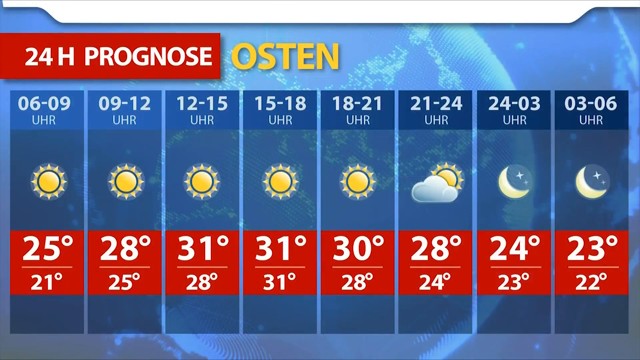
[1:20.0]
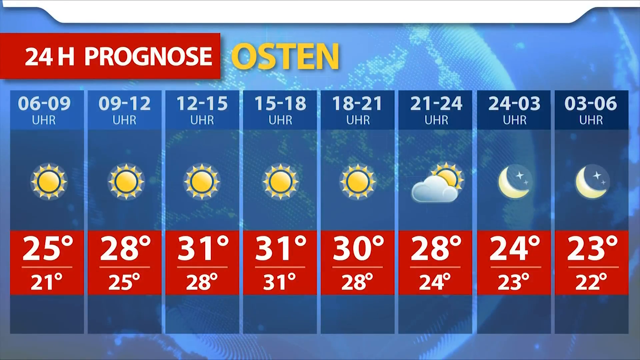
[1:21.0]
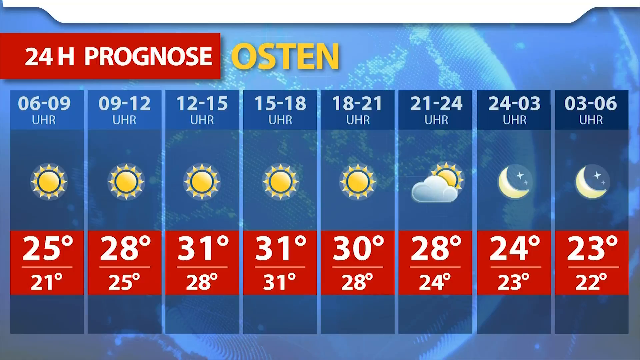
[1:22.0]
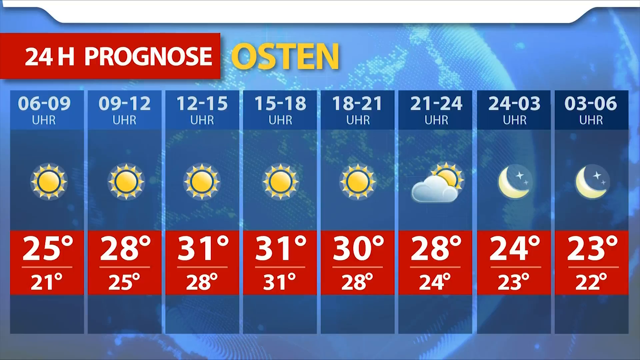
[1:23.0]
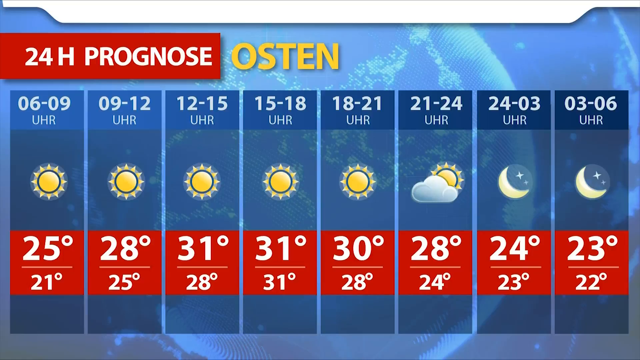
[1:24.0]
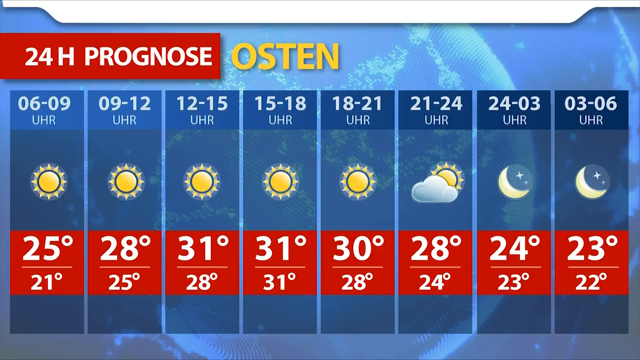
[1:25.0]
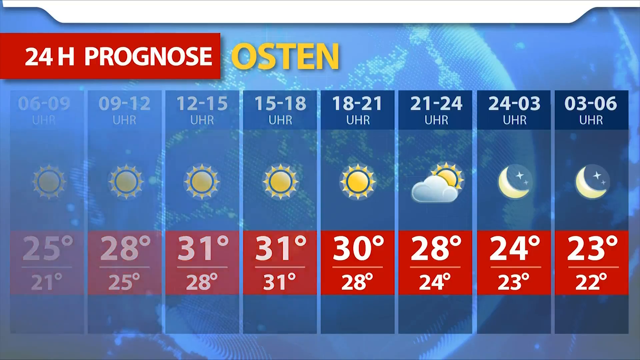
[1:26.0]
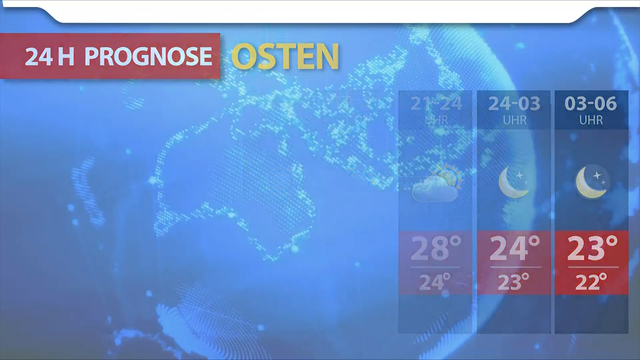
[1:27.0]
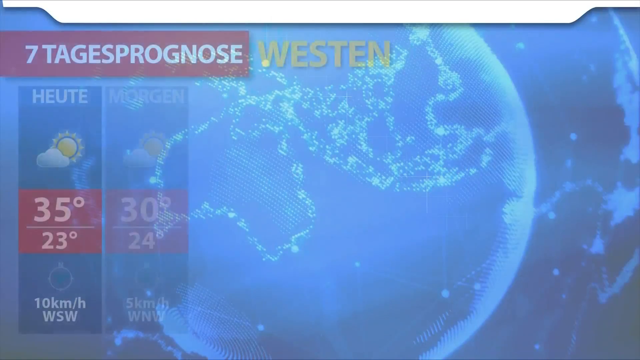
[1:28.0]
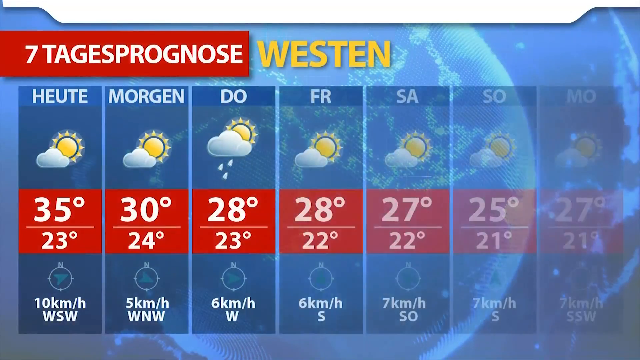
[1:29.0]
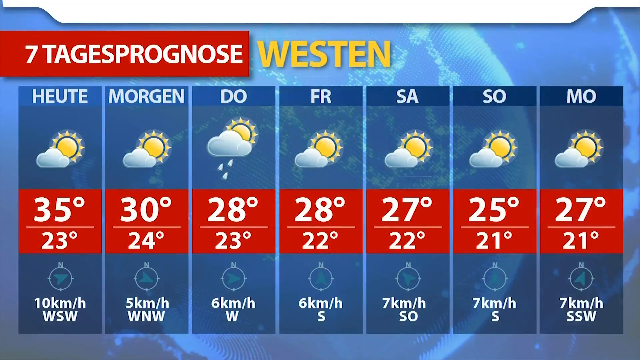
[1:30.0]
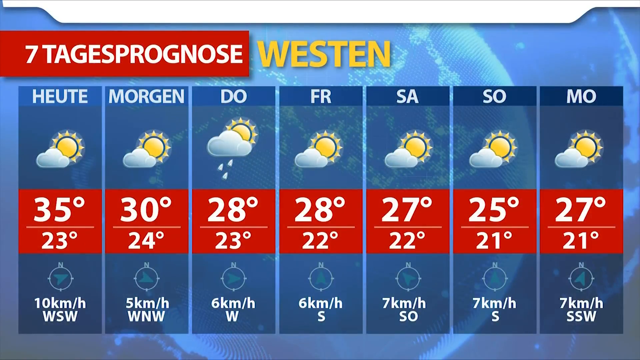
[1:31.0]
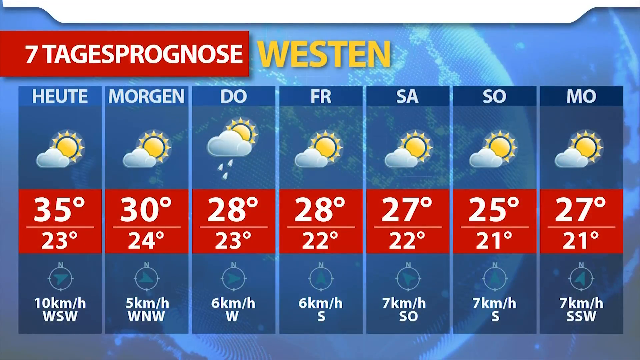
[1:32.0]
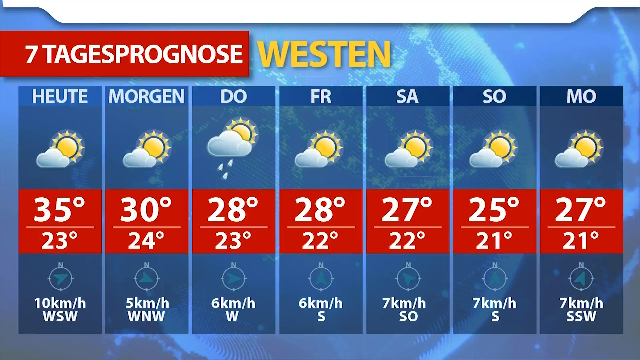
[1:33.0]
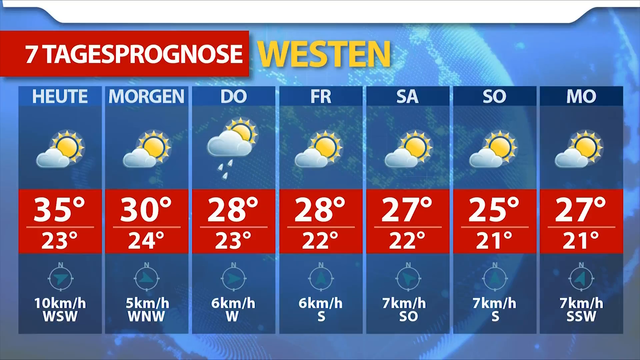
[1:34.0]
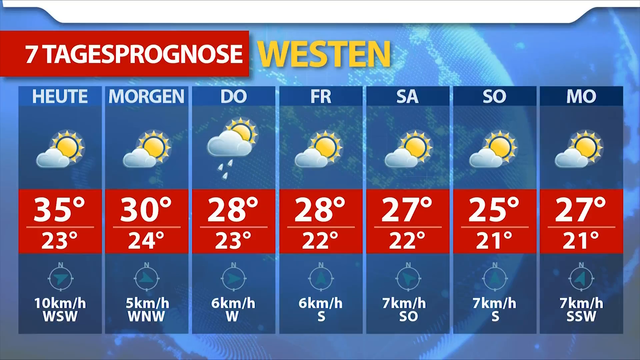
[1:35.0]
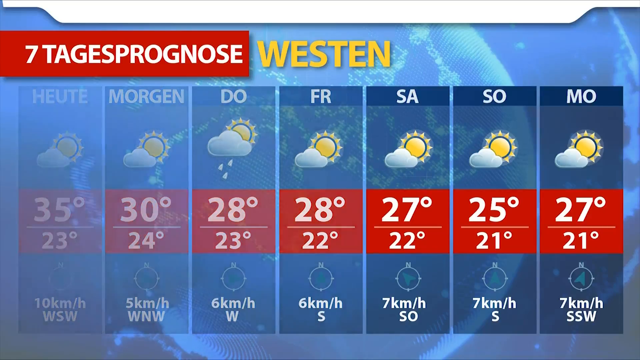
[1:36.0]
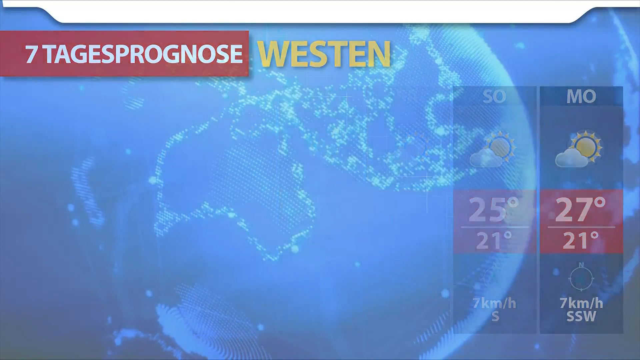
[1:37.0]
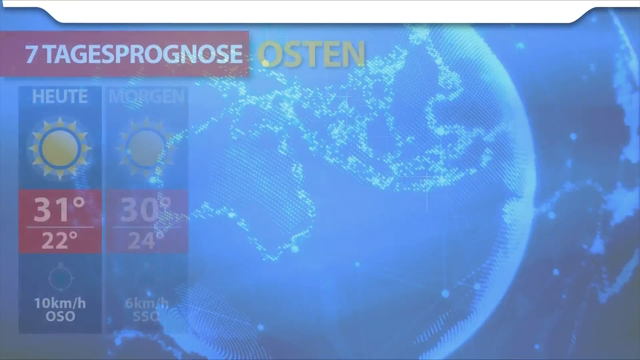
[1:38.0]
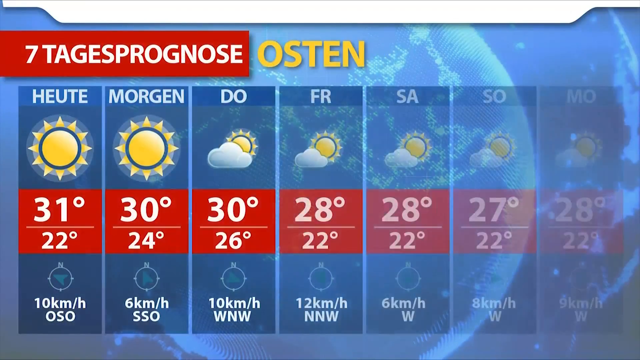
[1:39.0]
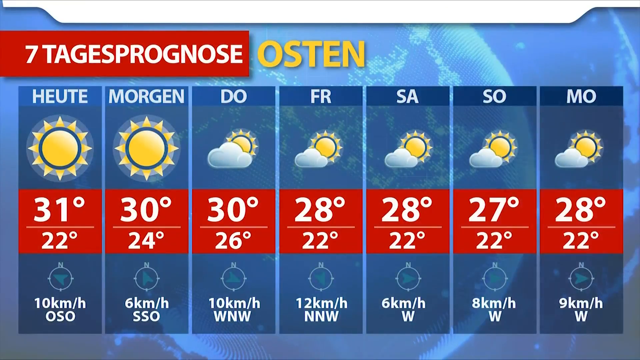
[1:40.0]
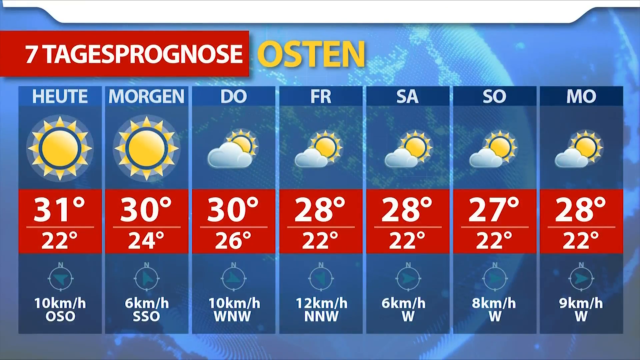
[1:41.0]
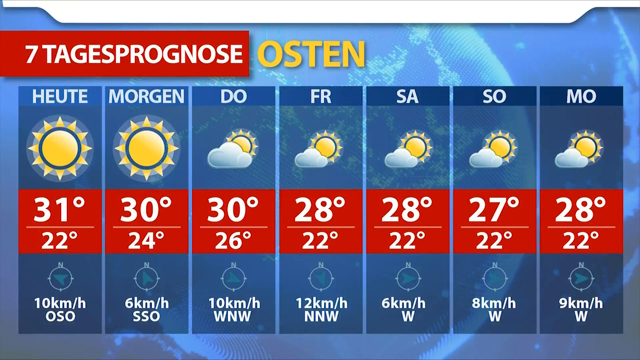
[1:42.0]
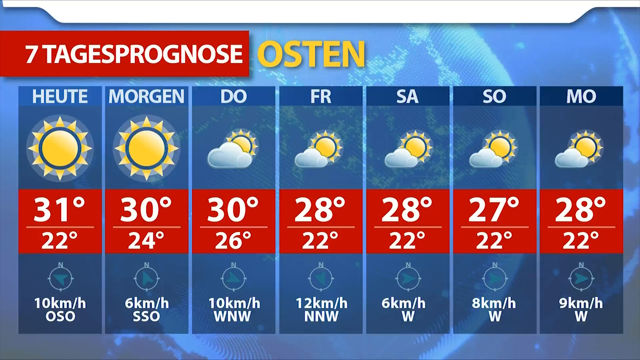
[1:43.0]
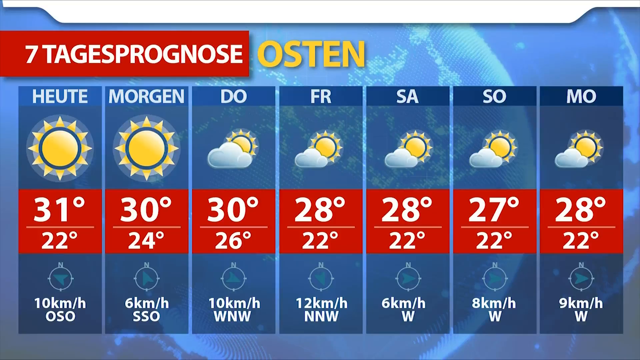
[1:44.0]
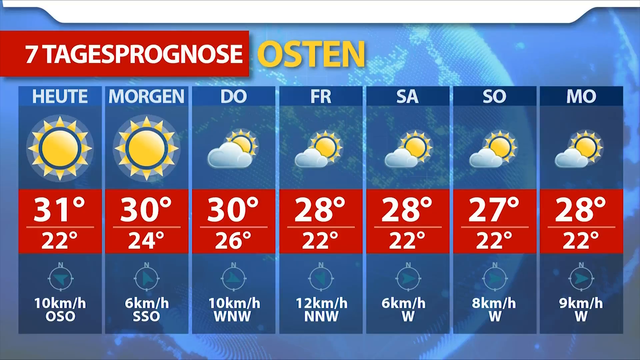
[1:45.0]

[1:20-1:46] A table shows the weather conditions for a place called Austin, with illustrations of the sun, clouds and the moon. The headline includes "Austin". The first row of the table is 06 to 09, and the first few hours are sunny. The video switches between tables, showing one and then another, apparently comparing the weather of two places, Austin and Westin.